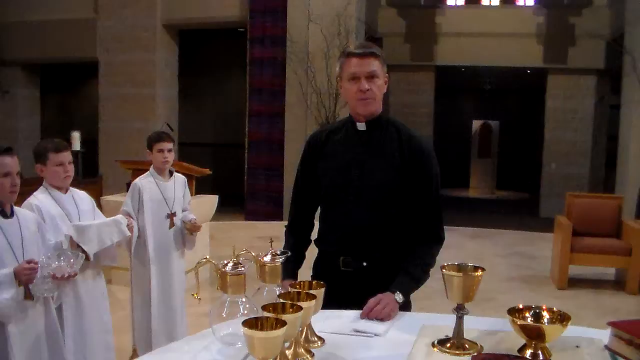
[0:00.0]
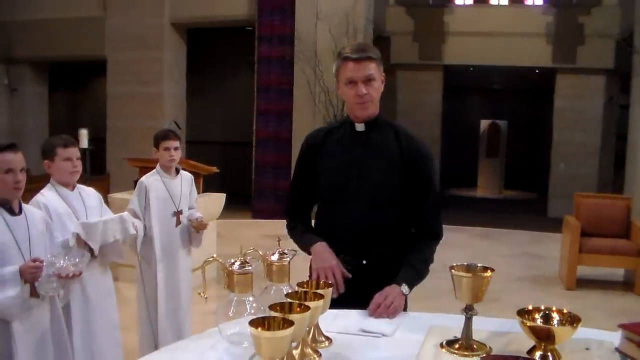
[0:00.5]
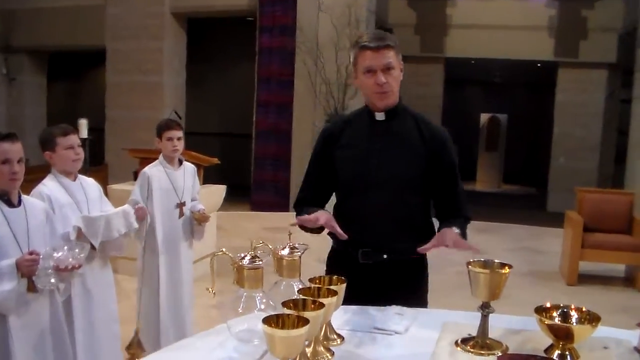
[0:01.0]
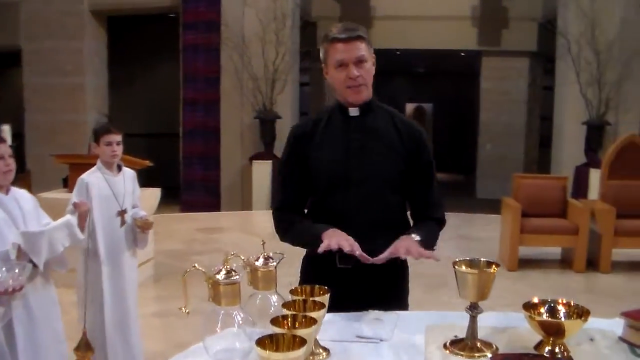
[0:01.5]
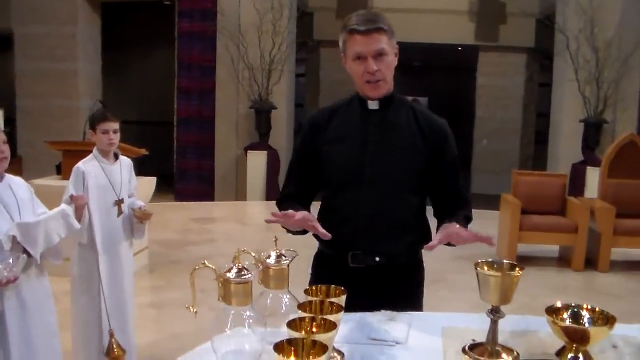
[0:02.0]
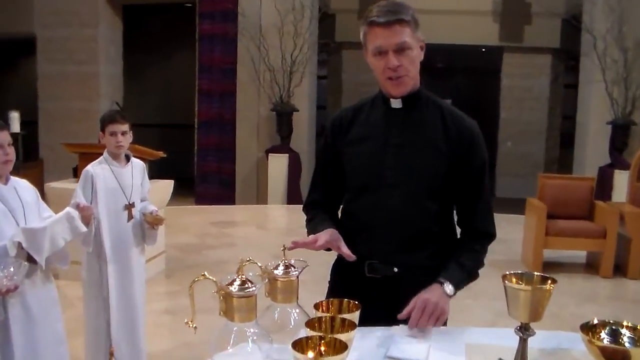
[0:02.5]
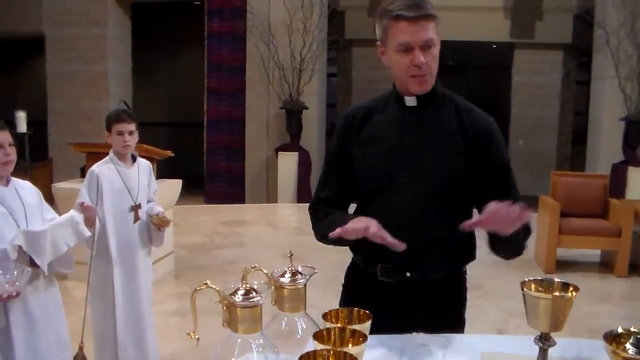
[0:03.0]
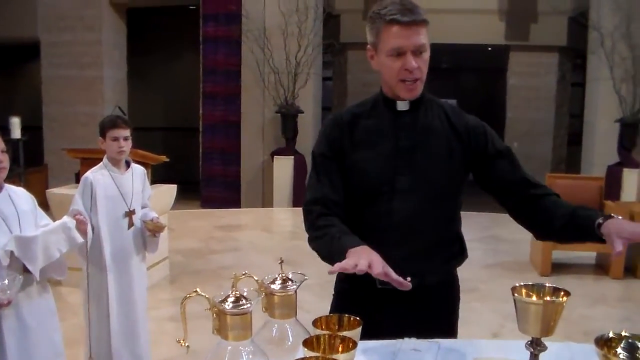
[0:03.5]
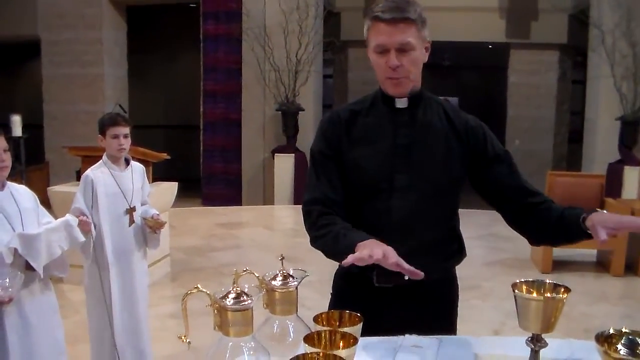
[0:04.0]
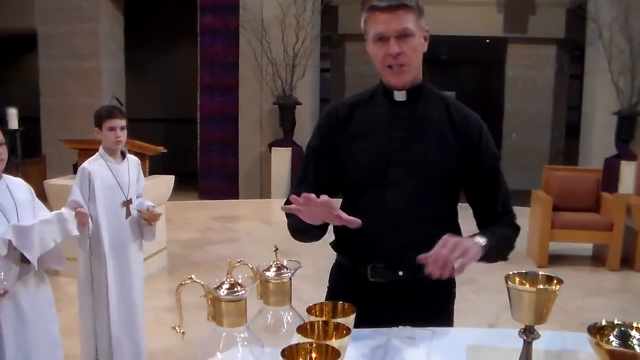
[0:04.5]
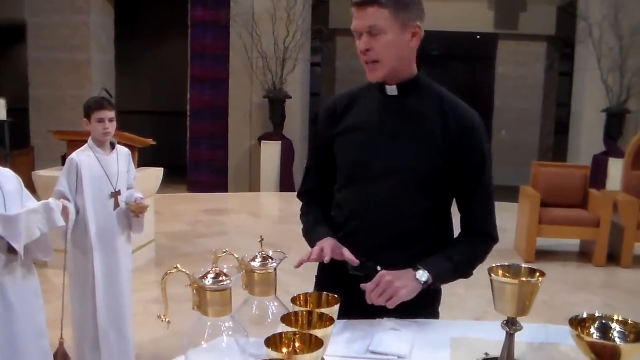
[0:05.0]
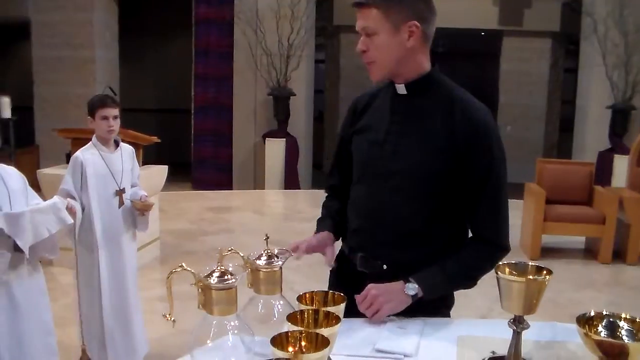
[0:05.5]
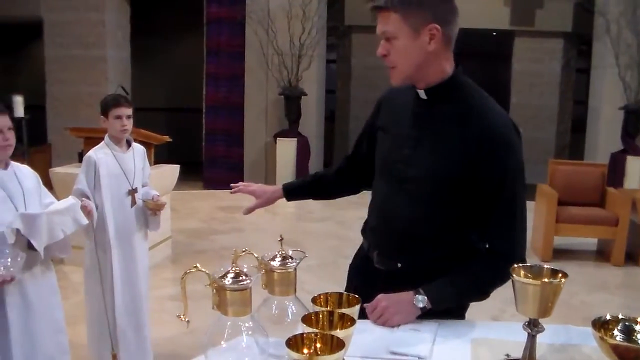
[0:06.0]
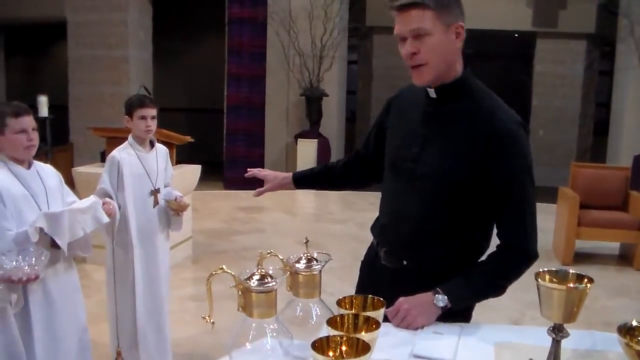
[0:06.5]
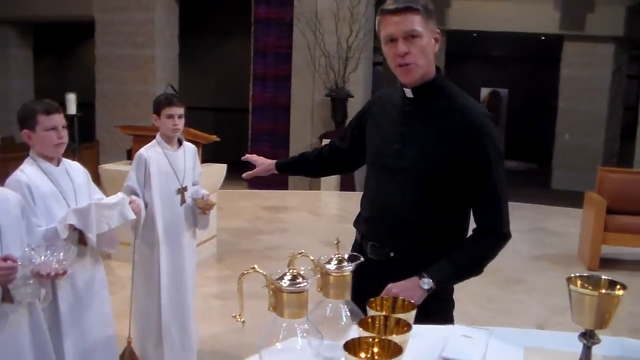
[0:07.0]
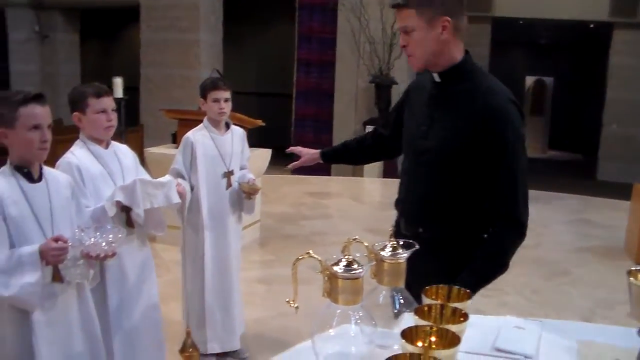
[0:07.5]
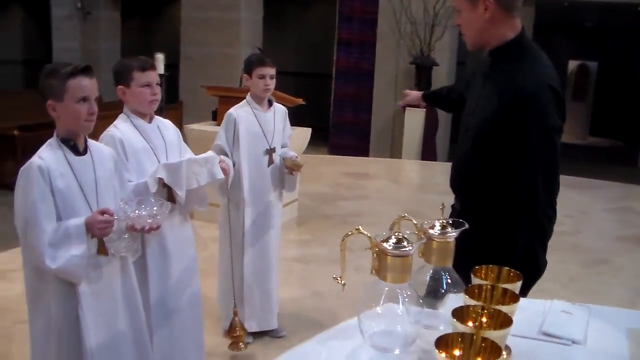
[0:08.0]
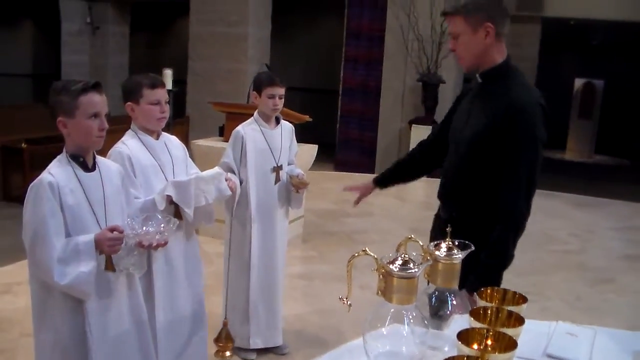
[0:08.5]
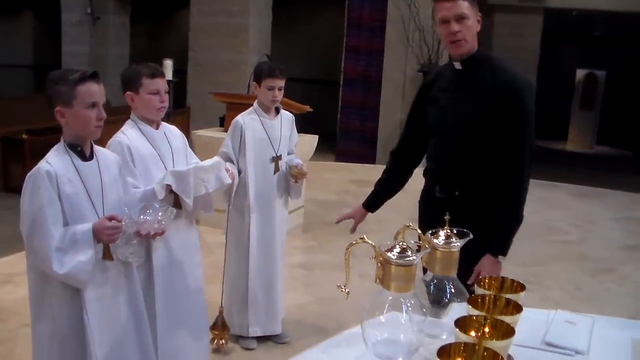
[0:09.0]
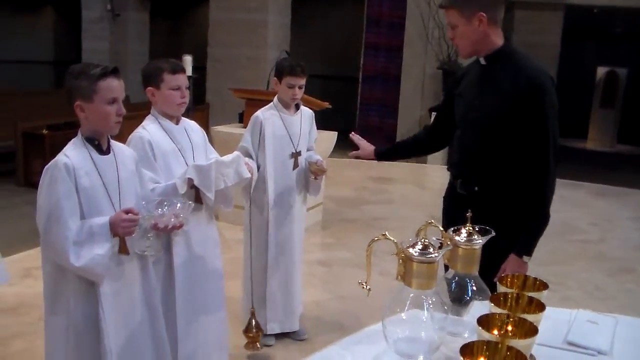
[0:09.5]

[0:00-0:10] In a church, a vicar stands next to a setup of various chalices and water-pouring decanters or bottles: six chalices to drink out of and two decanters for the water. He explains something about these pieces to three altar boys. The vicar wears black attire with a classic collar. The altar boys wear white attire that looks like robes, with crosses around their necks. All three boys are holding things: one holds a bowl, another holds a bowl with a cloth over it, and the third holds what looks to be a bowl. The priest points to the three of them and engages in conversation with them.